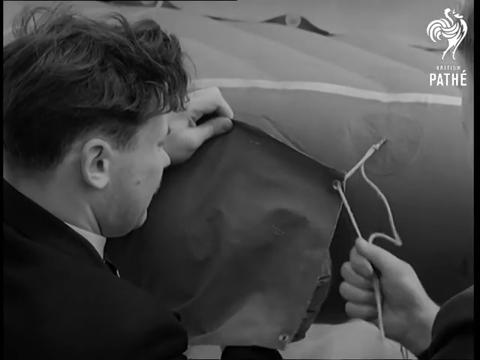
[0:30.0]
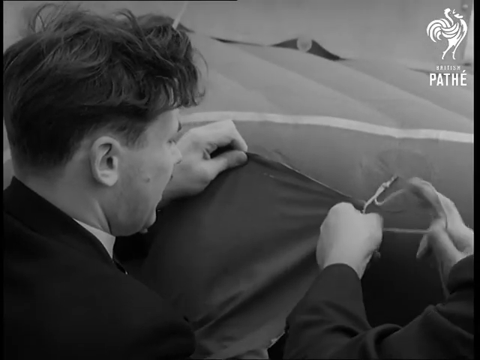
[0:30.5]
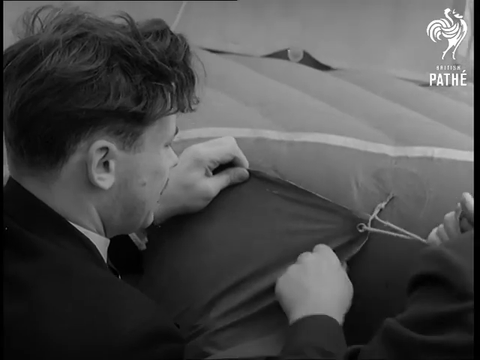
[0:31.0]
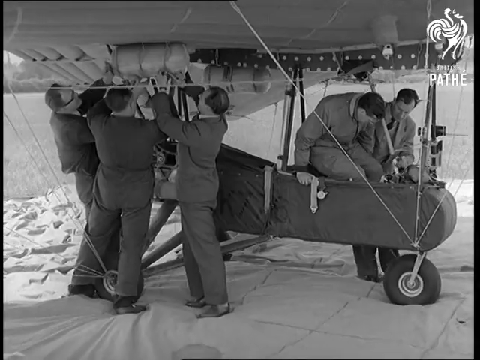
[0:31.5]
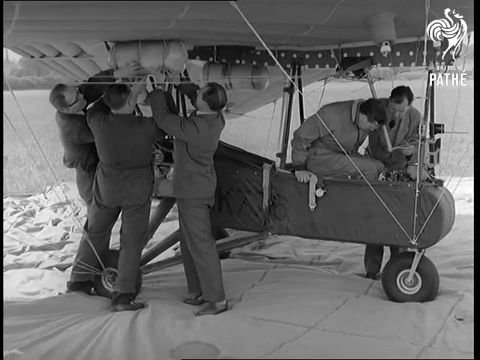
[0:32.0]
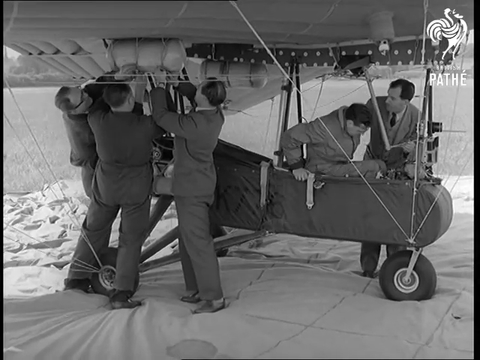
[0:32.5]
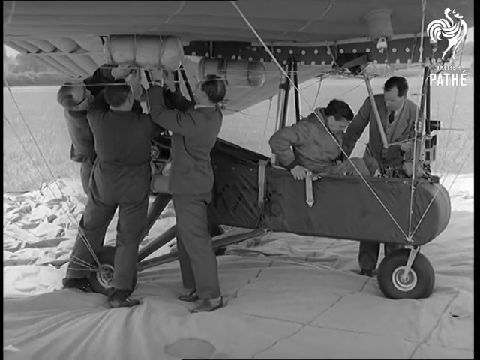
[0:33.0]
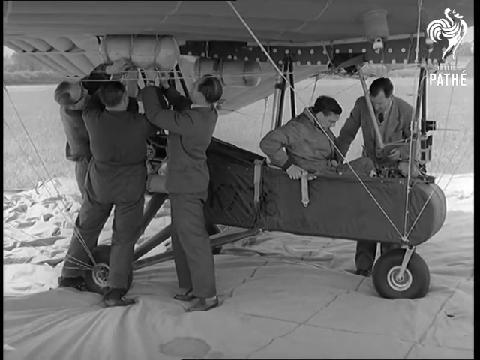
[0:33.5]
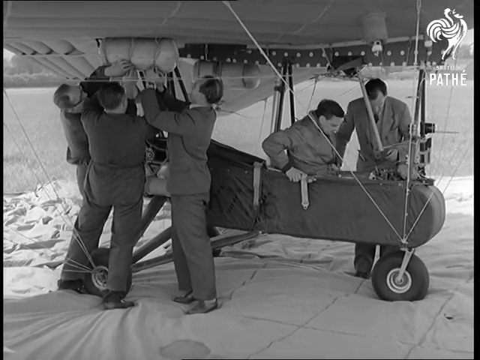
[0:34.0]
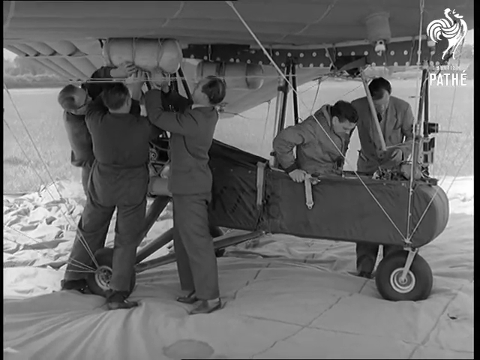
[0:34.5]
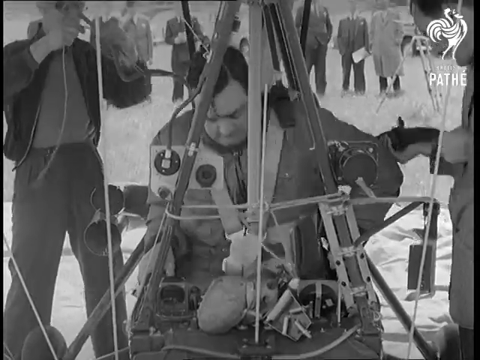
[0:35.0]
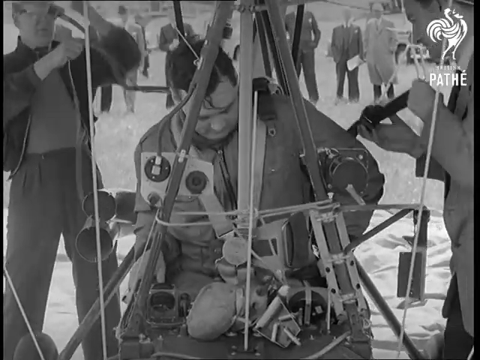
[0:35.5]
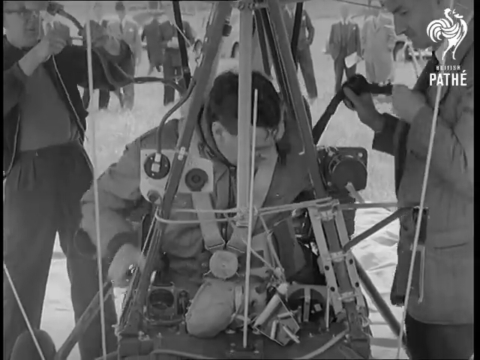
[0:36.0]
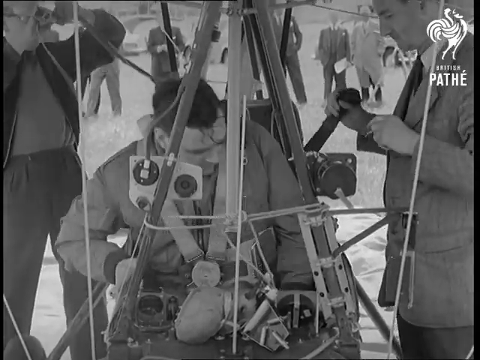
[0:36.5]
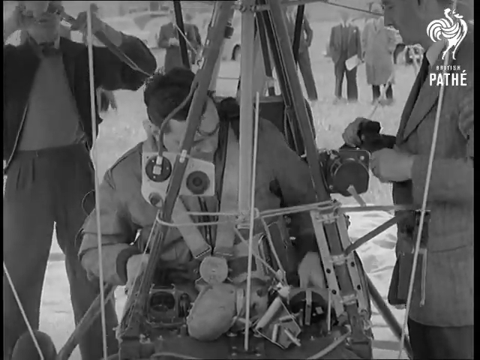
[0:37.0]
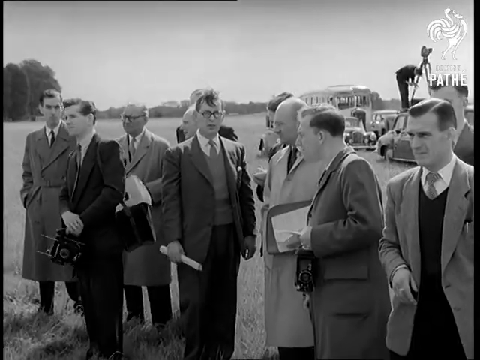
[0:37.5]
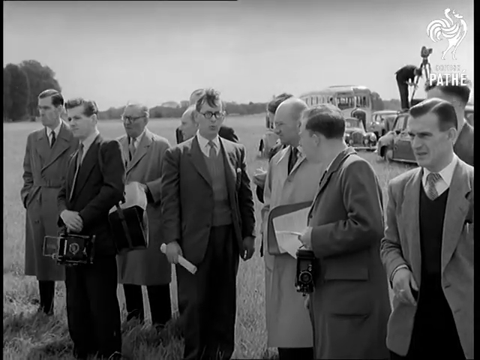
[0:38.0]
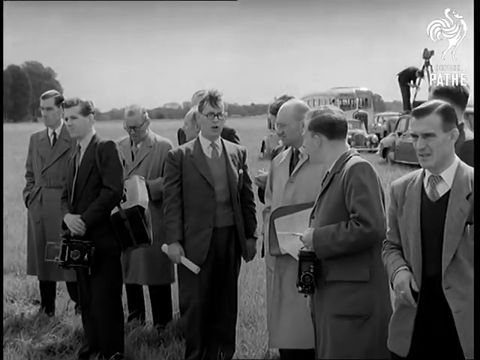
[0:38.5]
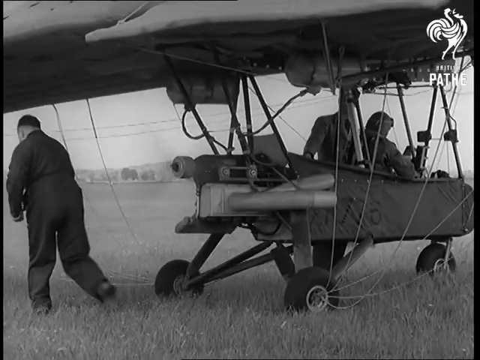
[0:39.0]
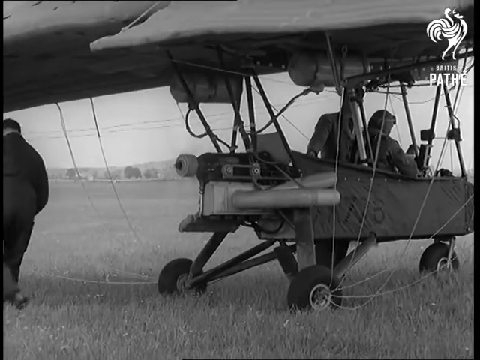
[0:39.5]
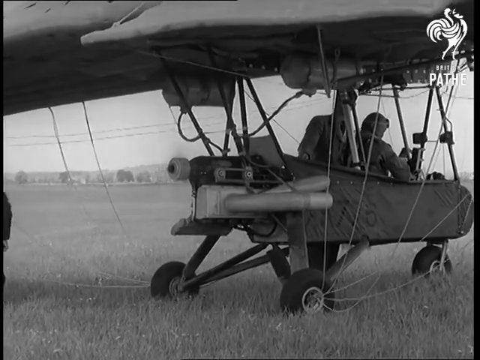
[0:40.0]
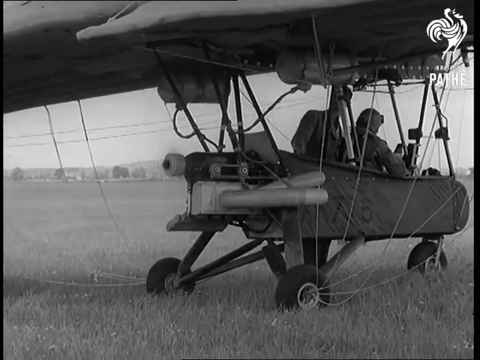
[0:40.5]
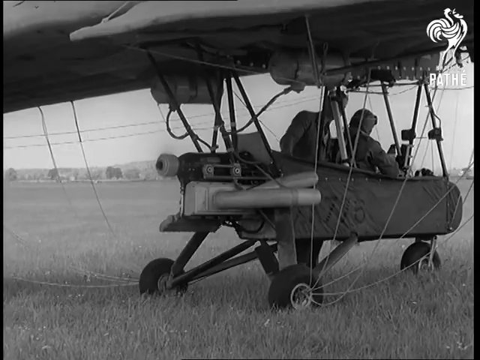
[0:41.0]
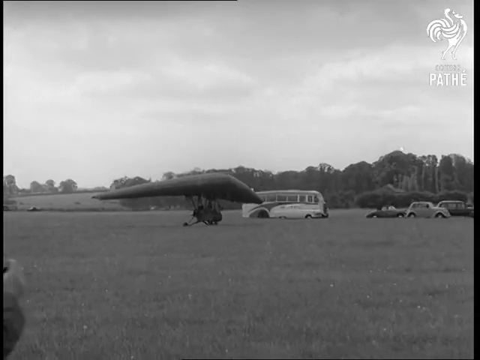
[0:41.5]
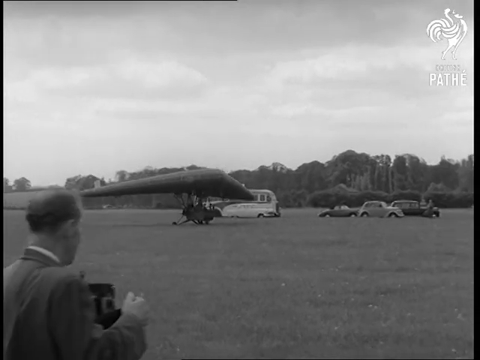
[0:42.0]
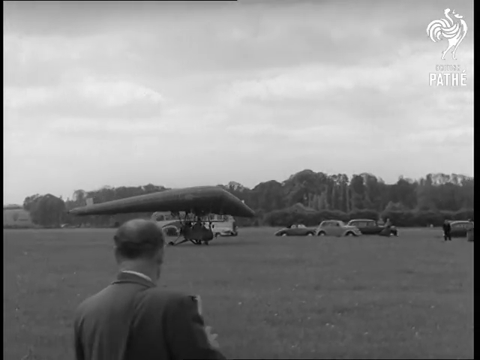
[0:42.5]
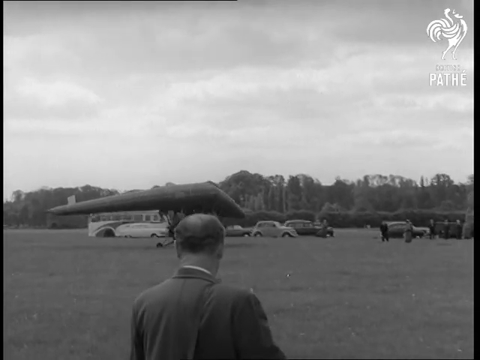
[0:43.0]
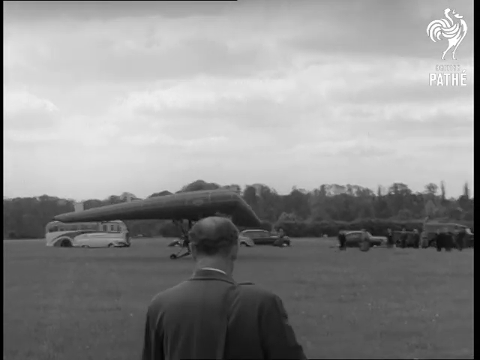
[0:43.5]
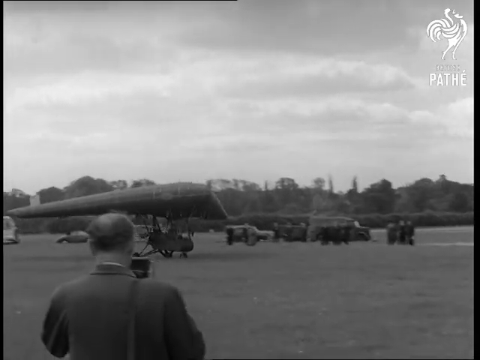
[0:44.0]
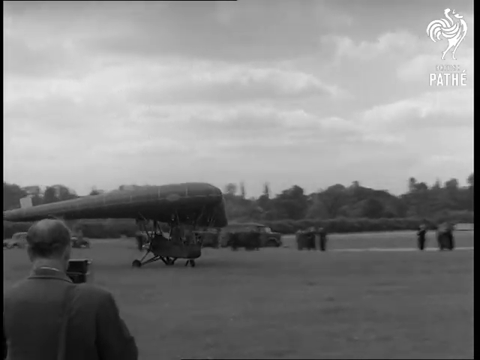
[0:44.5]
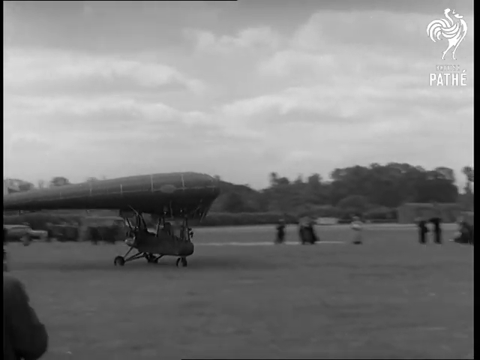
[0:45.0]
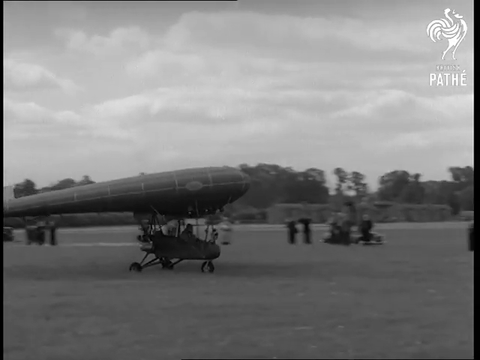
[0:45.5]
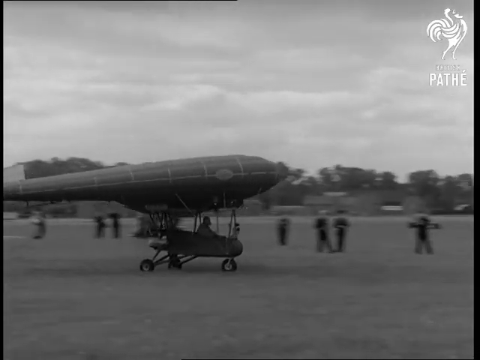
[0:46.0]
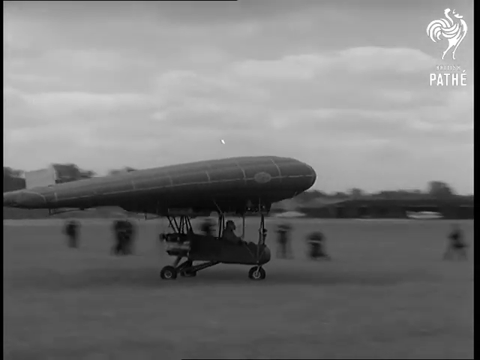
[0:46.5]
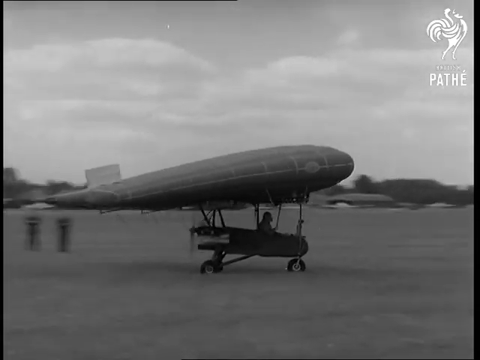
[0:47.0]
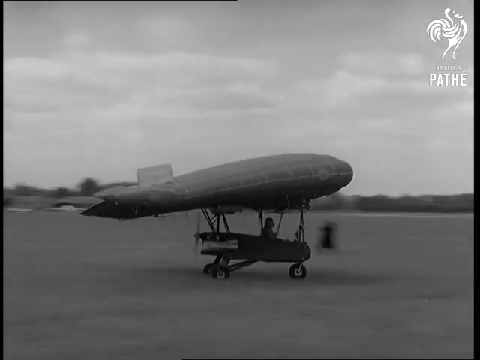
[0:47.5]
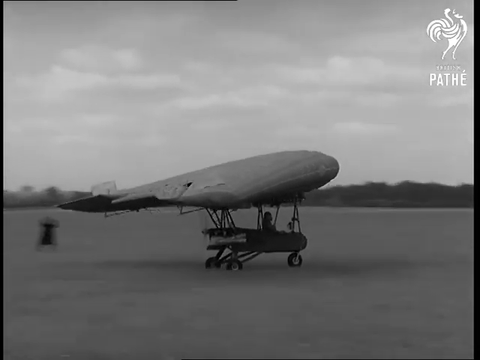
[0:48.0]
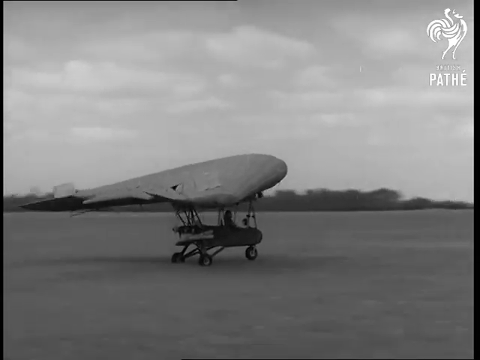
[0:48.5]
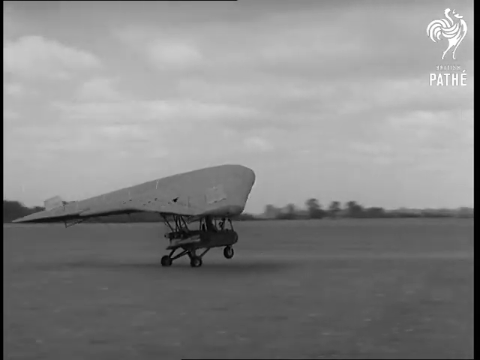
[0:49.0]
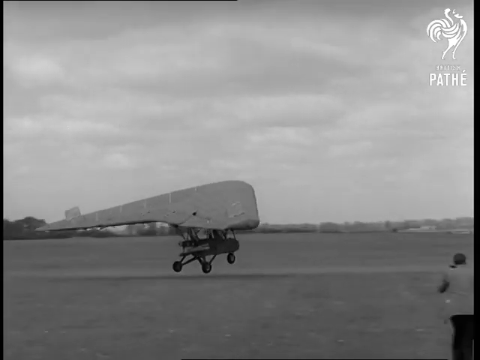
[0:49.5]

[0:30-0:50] Two men are apparently tightening one end of the fabric, where a rope or string is threaded through the grommet hole. The shot shifts to at least five men, at least three of them in business suits. The man in the jumpsuit enters a compartment in the small vehicle, which is very narrow and maybe only six feet long. Another man helps him get into the compartment, sitting, while three other men at the rear adjust something underneath the inflated balloon. The compartment opens up, and another man helps strap a seat belt onto him. The scene shifts to other men standing as observers: one holds a clipboard, and two have old vintage cameras. The period is possibly the 1920s. Other men wear trench coats or outer coats. Back at the vehicle, the motor in the rear is running, with a fan apparently spinning. The camera pulls back to show the vehicle running through the field, where there are at least three vehicles, with a balding man in the foreground with his back to the camera. The flying machine runs across the field and lifts off the ground.